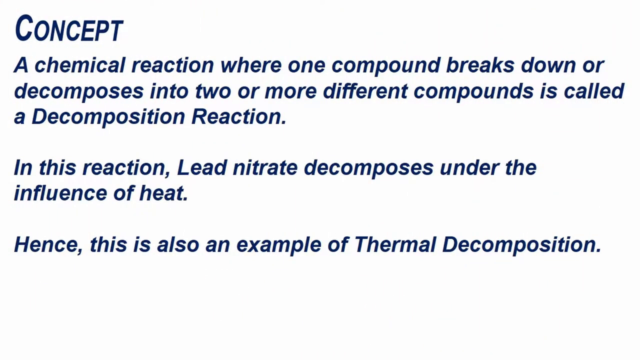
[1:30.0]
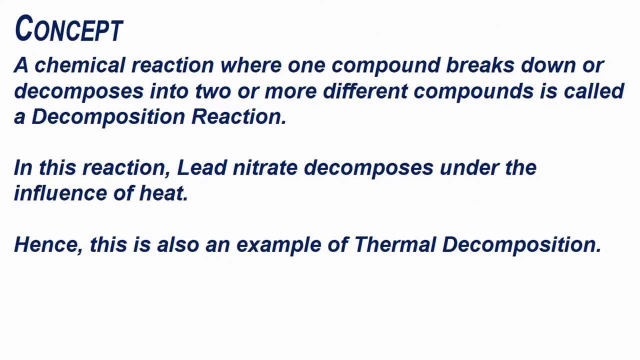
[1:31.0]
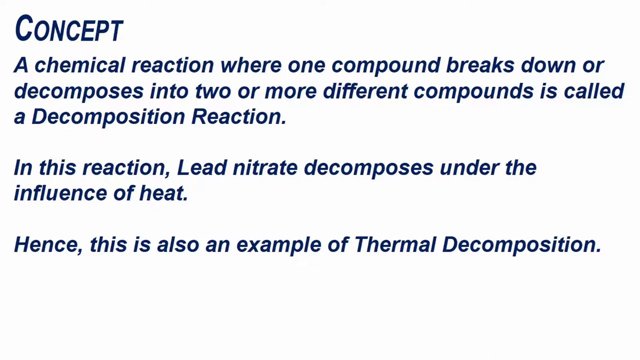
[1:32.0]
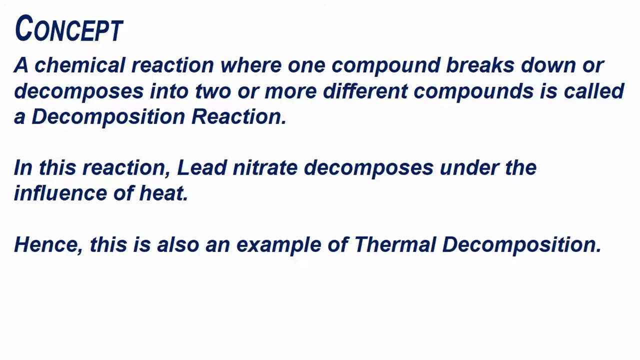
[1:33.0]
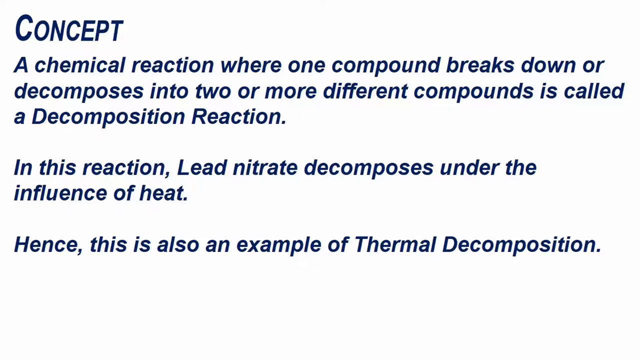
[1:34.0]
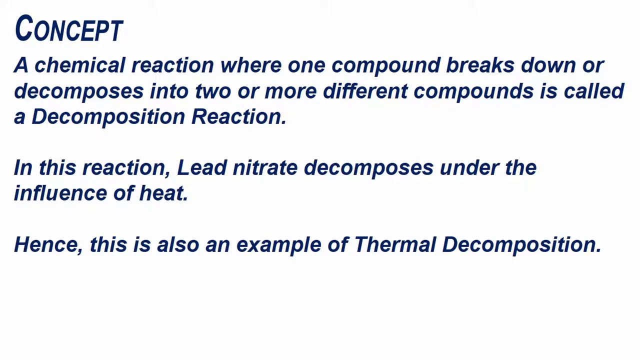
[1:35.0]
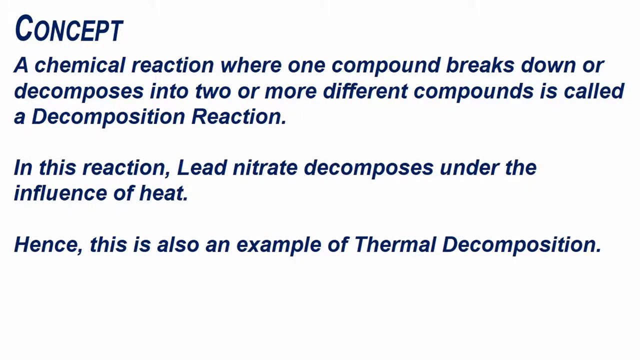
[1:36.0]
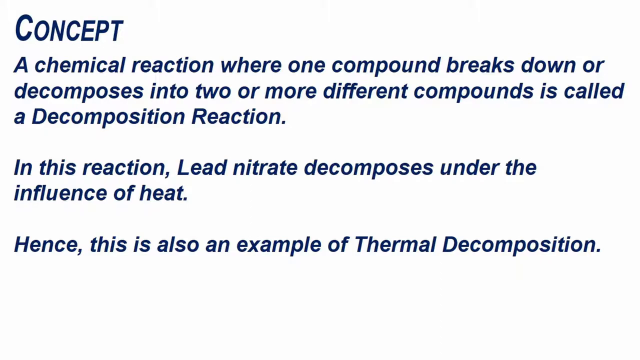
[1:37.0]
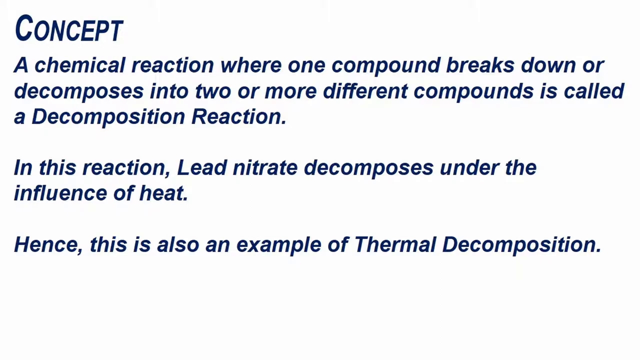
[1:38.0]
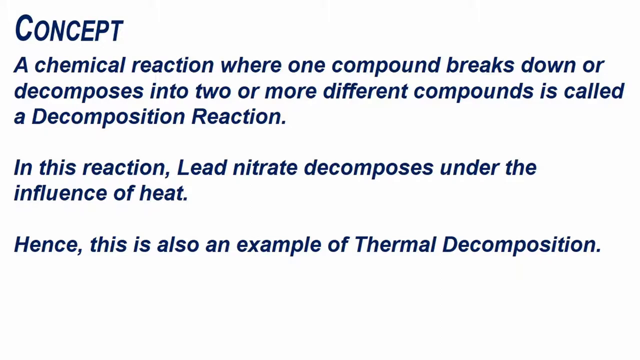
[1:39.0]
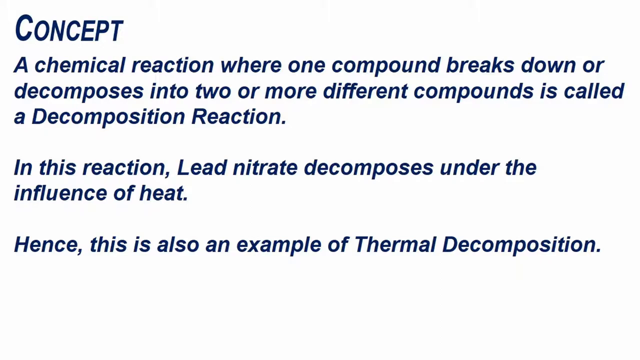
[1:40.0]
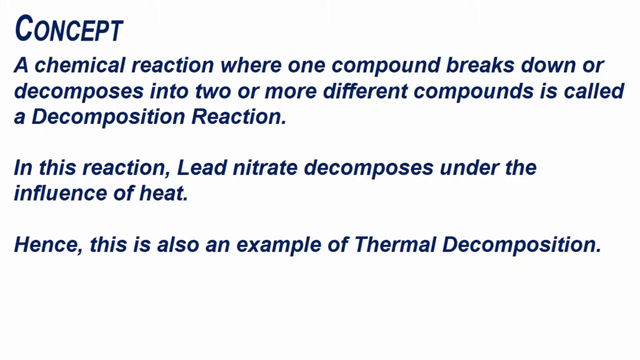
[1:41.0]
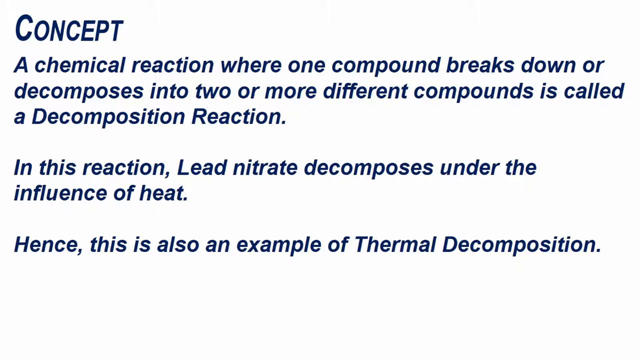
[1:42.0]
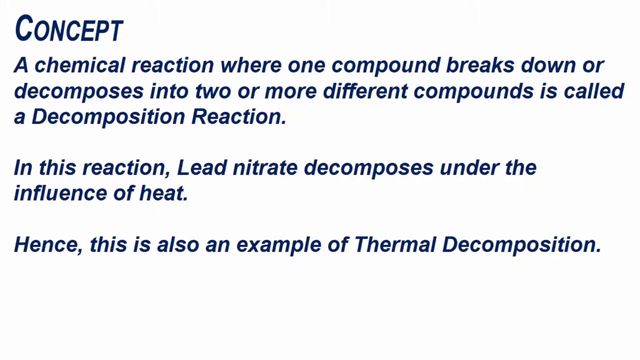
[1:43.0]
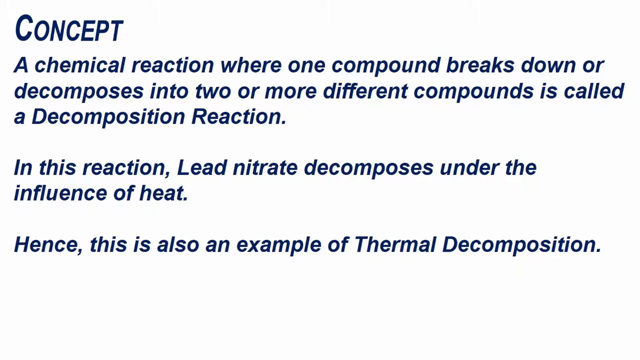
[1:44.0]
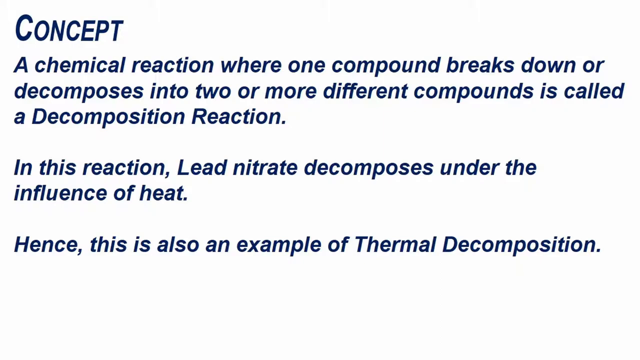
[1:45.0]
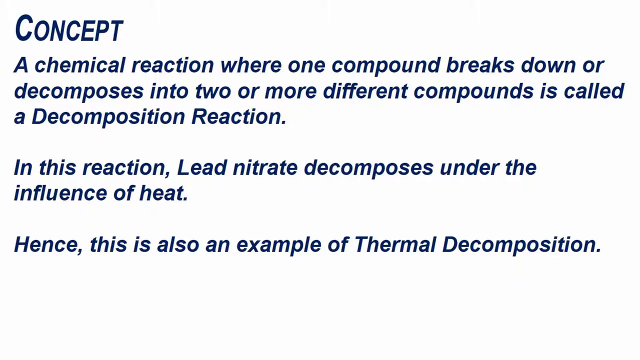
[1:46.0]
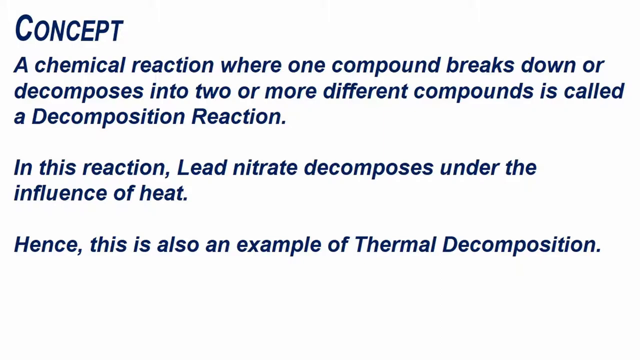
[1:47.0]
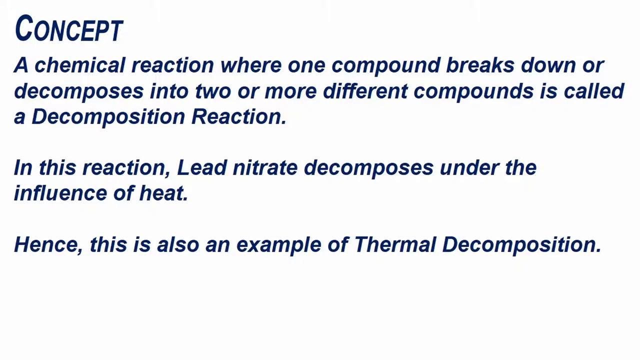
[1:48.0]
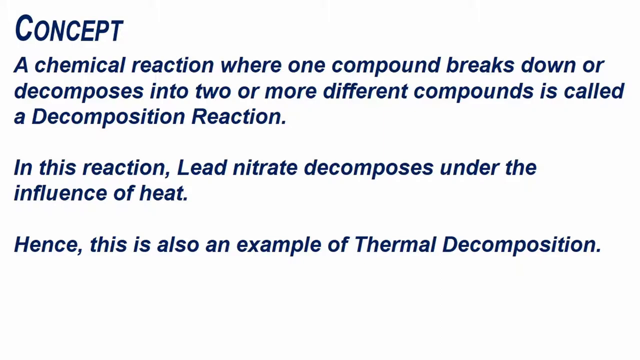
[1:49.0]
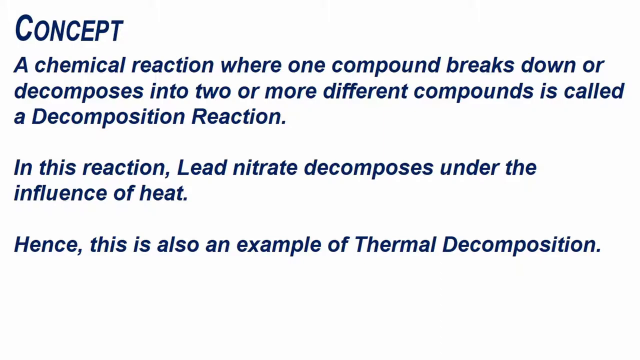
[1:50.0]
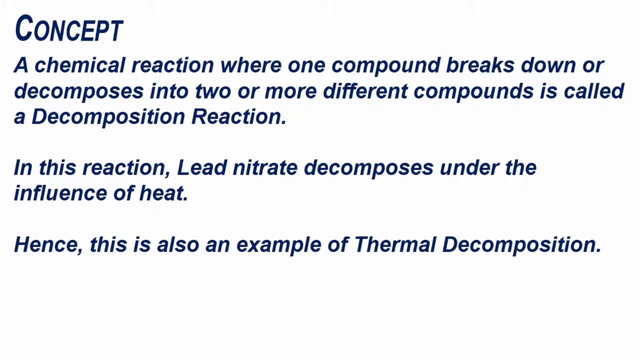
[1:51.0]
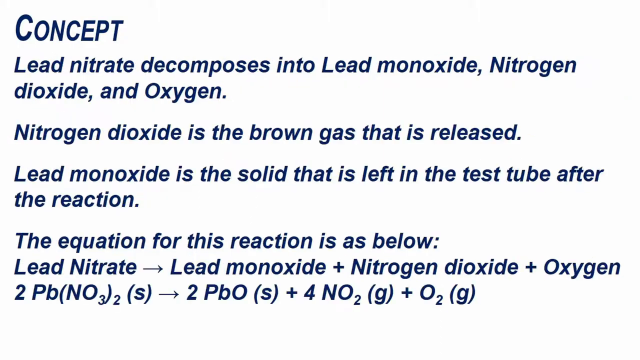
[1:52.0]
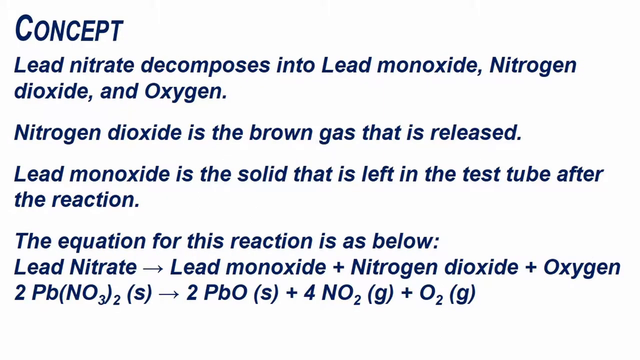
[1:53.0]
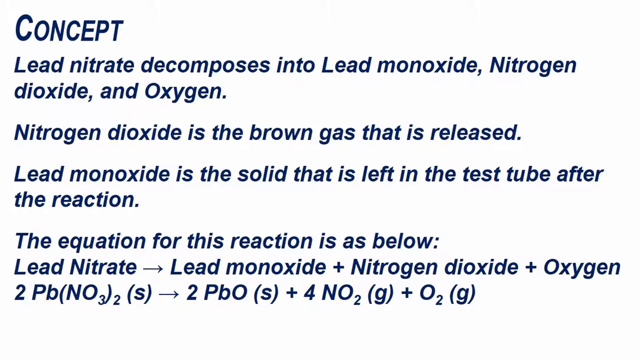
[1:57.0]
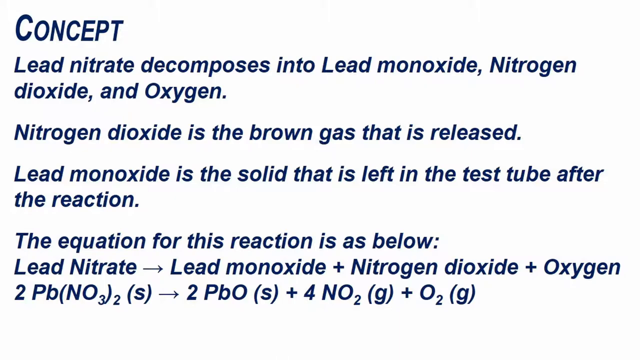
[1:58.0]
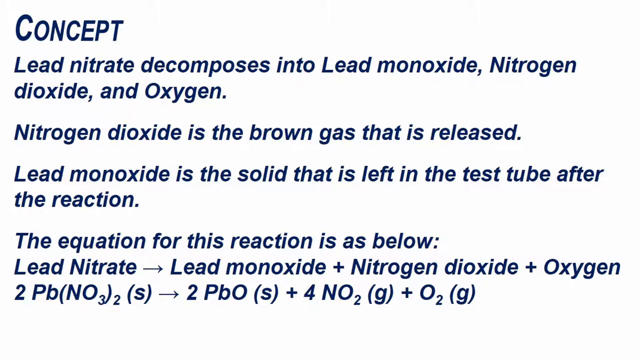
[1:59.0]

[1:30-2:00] A white background with blue text appears; the text takes up the top of the screen down to almost two-thirds or three-quarters of it. It reads: "Concept: a chemical reaction where one compound breaks down or decomposes into two or more different compounds is called a decomposition reaction. In this reaction, lead nitrate decomposes under the influence of heat. Hence, this is also an example of thermal decomposition." The text then changes to: "Concept. Lead nitrate decomposes into lead monoxide, nitrogen dioxide, and oxygen. Nitrogen dioxide is the brown gas that is released. Lead monoxide is a solid that's left in the test tube after the reaction. The equation for this reaction is as below. Lead nitrate to lead monoxide plus nitrogen dioxide plus oxygen." A formula is shown below that.